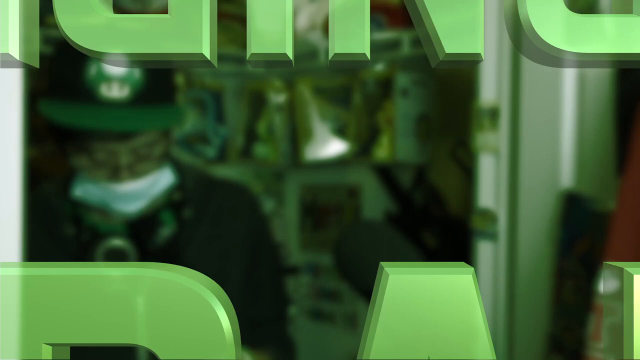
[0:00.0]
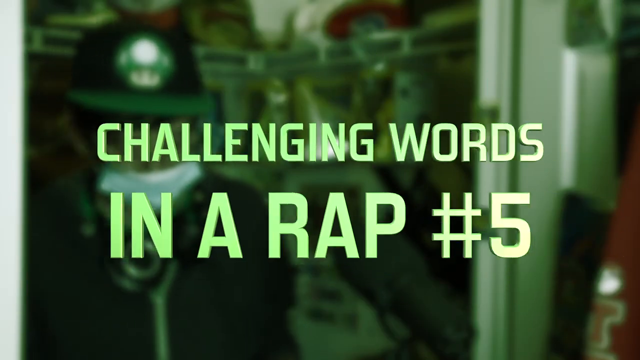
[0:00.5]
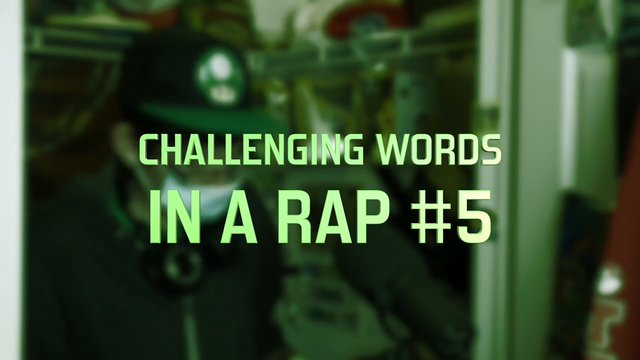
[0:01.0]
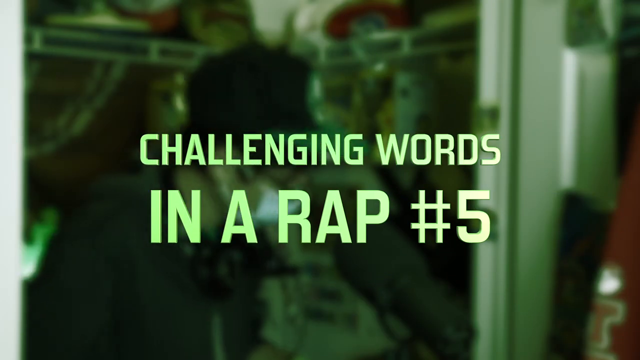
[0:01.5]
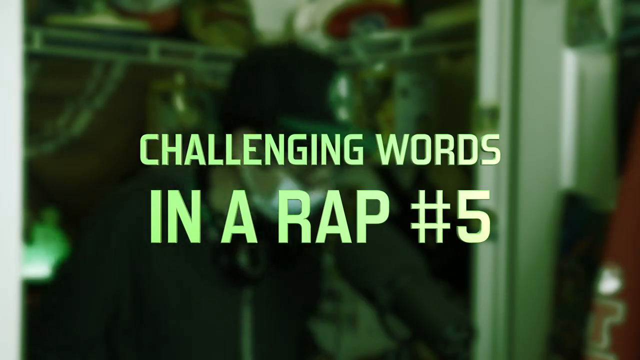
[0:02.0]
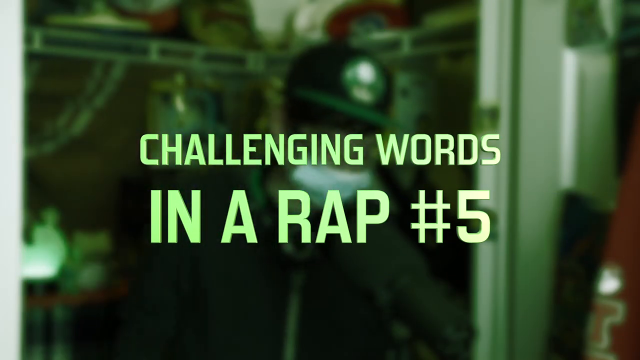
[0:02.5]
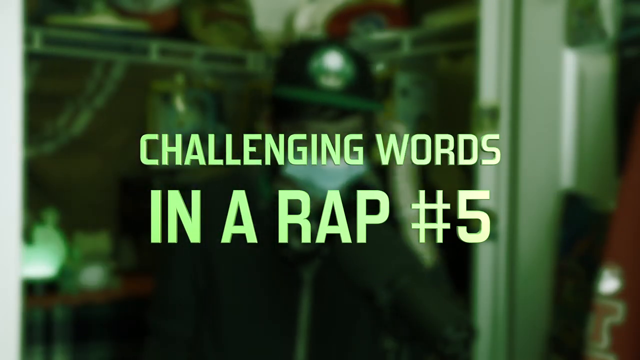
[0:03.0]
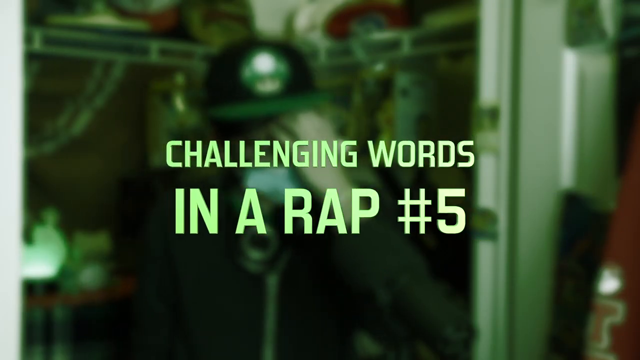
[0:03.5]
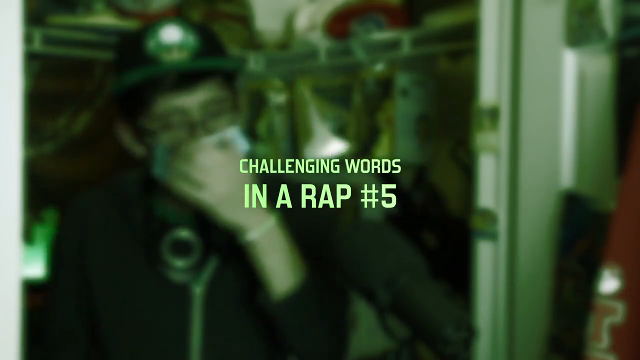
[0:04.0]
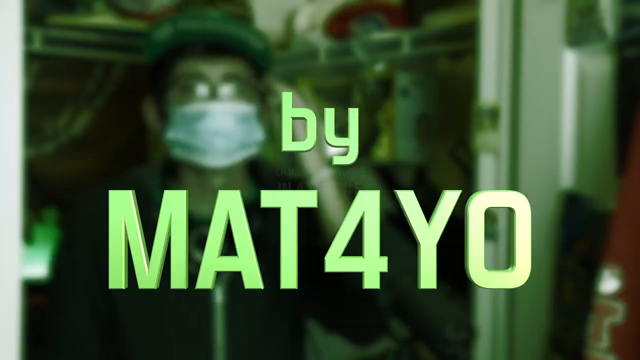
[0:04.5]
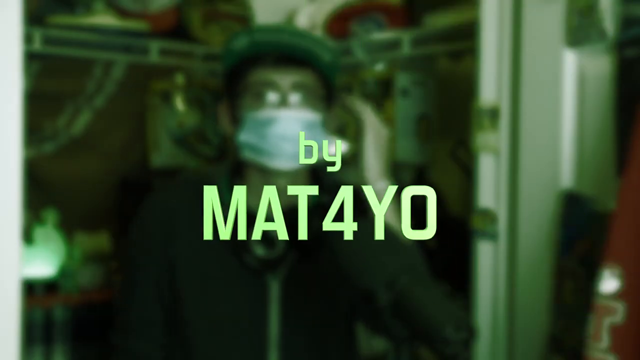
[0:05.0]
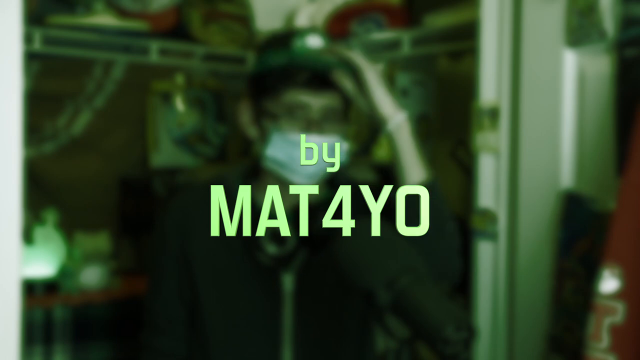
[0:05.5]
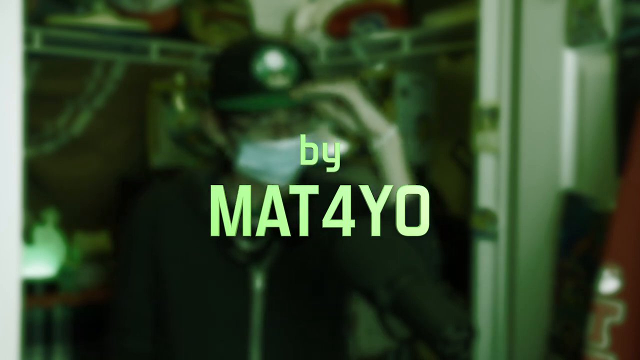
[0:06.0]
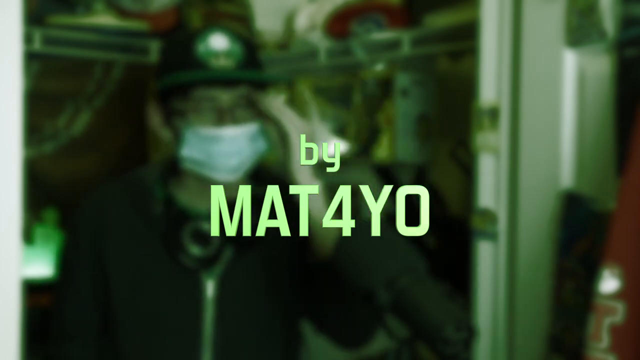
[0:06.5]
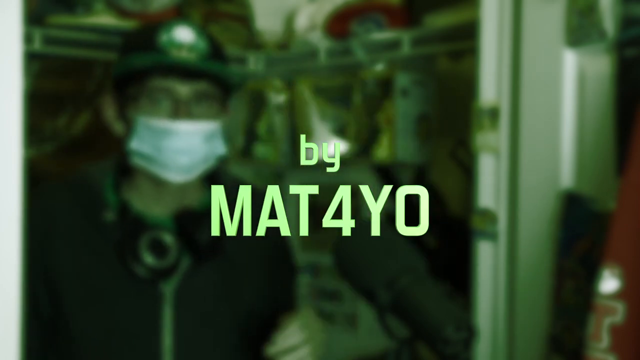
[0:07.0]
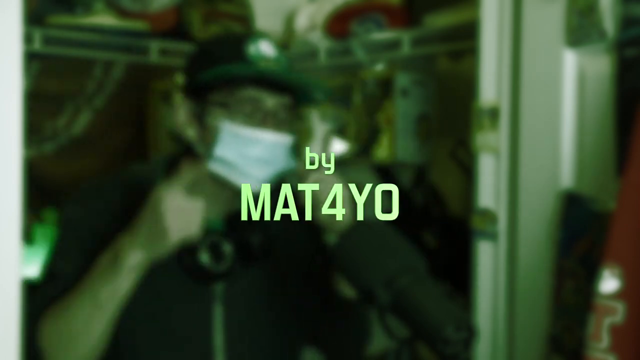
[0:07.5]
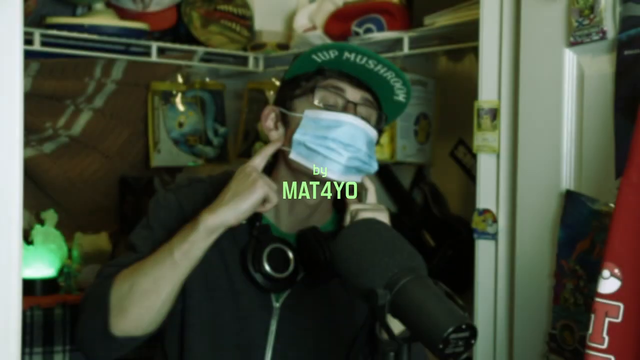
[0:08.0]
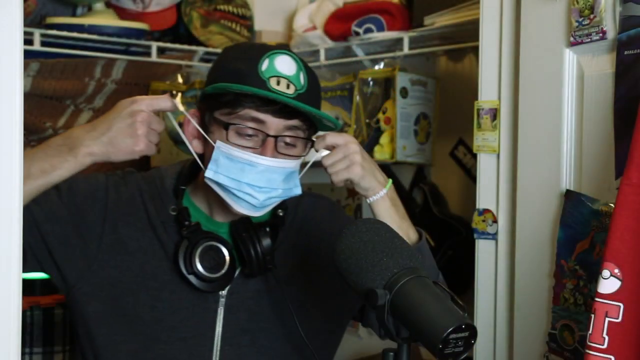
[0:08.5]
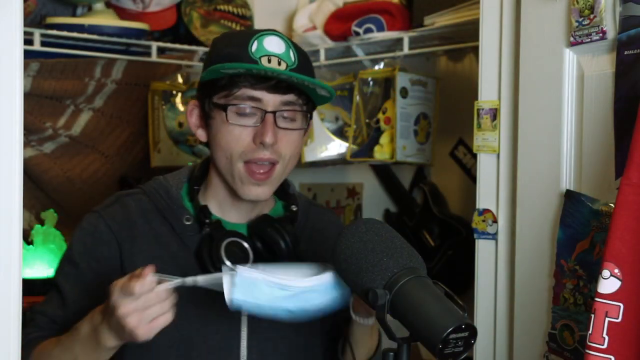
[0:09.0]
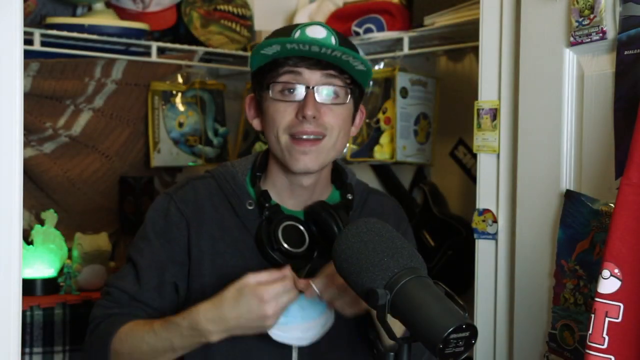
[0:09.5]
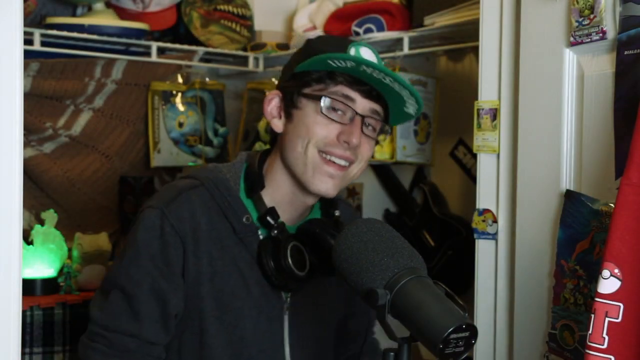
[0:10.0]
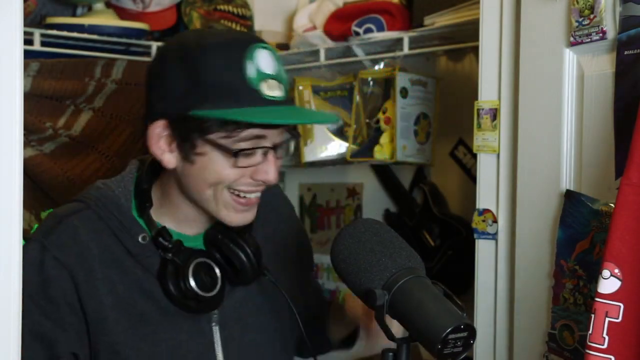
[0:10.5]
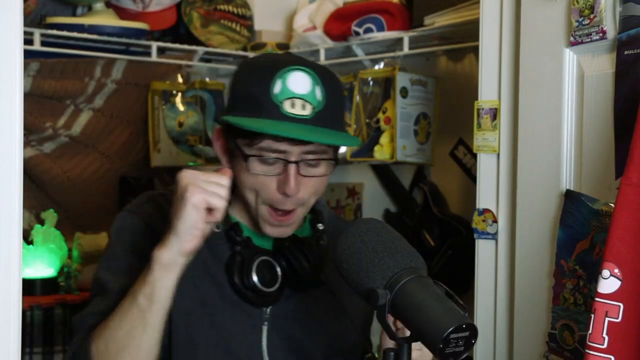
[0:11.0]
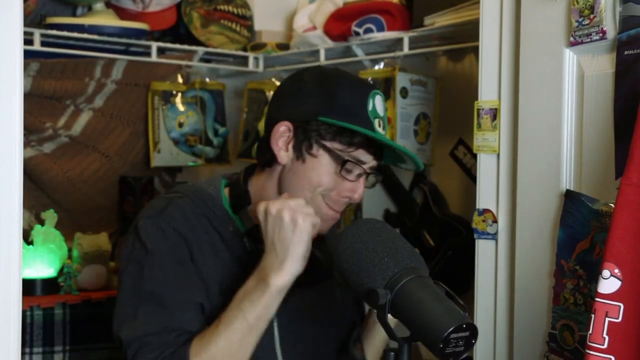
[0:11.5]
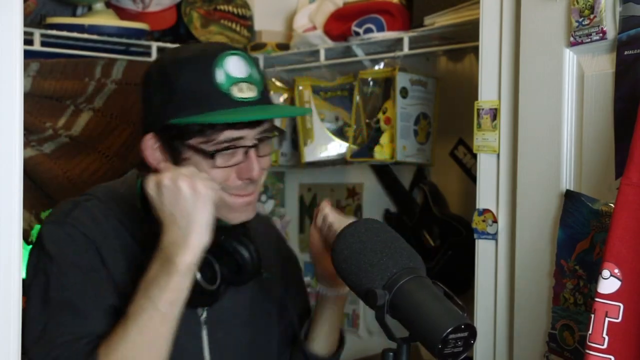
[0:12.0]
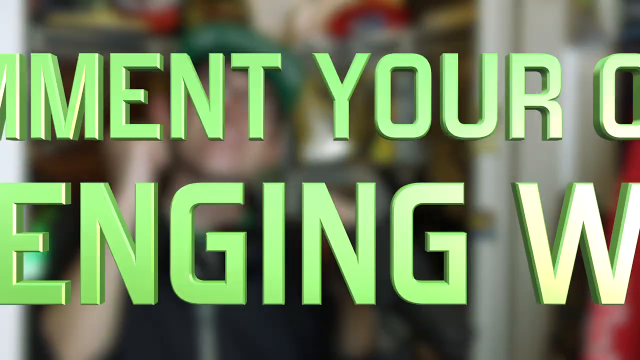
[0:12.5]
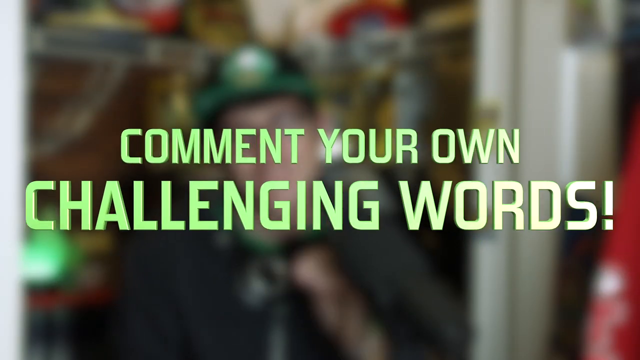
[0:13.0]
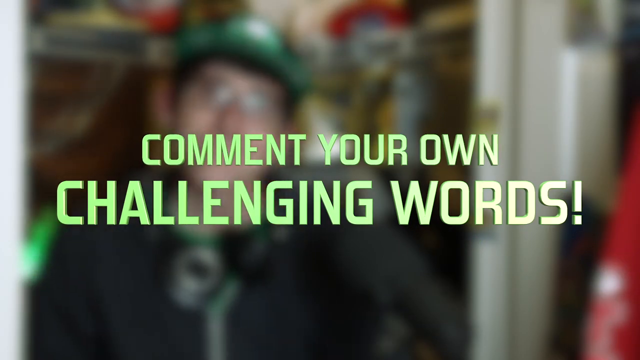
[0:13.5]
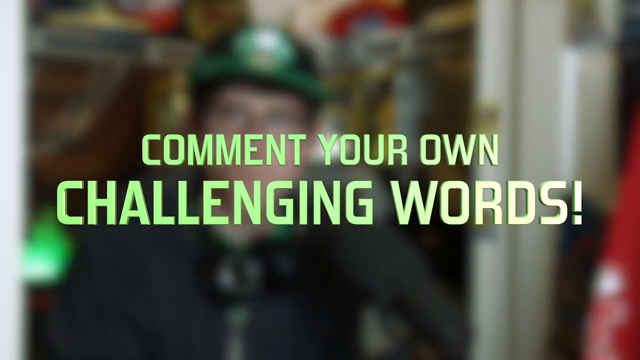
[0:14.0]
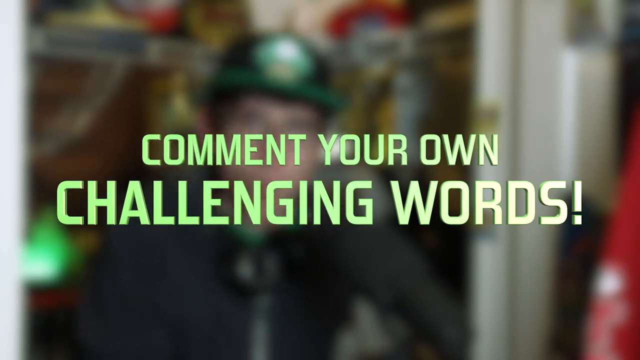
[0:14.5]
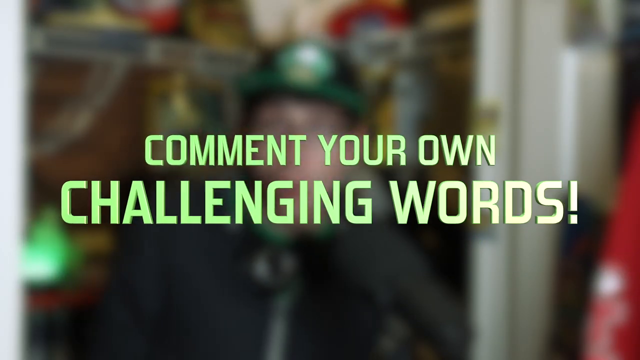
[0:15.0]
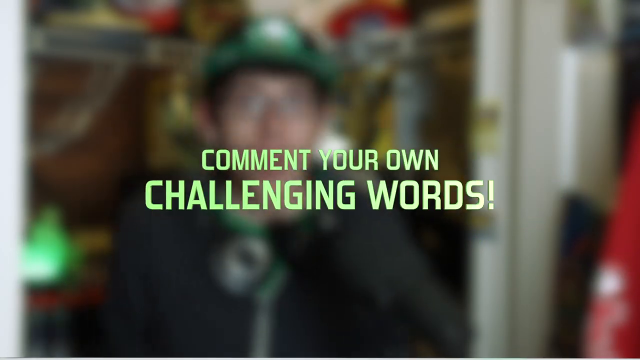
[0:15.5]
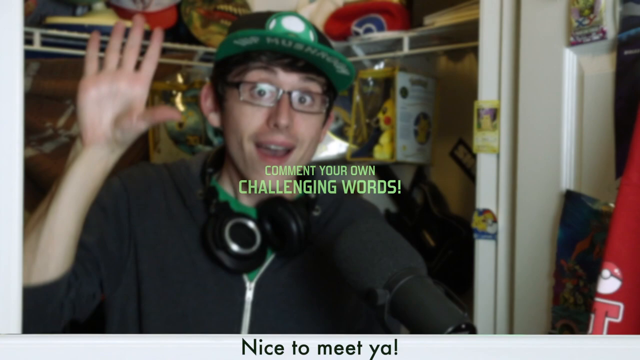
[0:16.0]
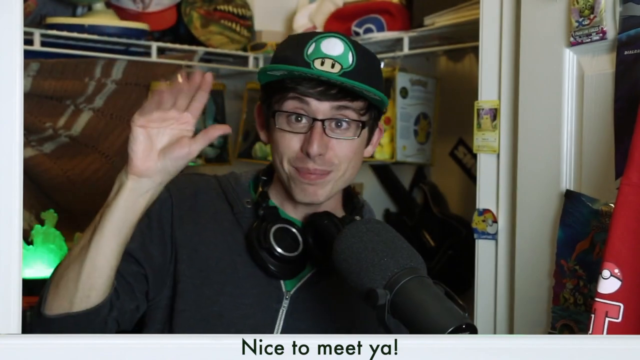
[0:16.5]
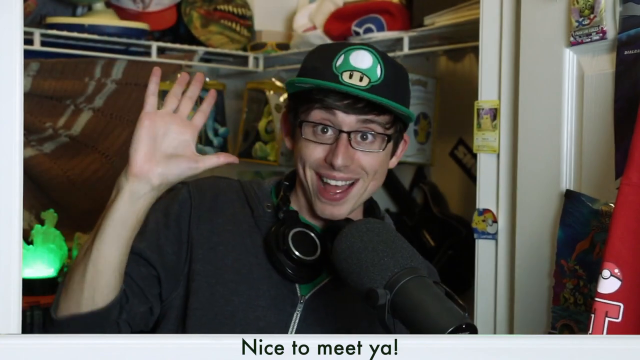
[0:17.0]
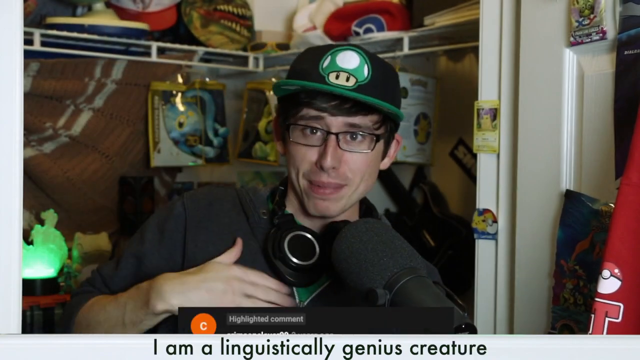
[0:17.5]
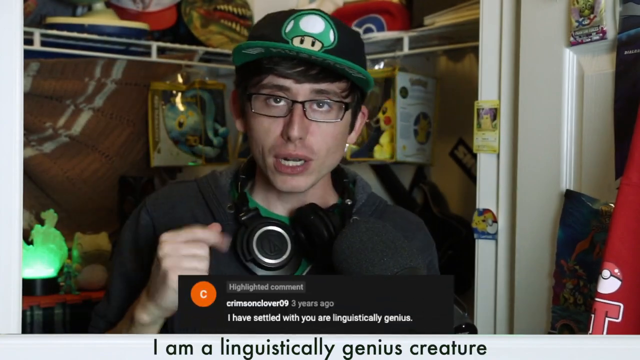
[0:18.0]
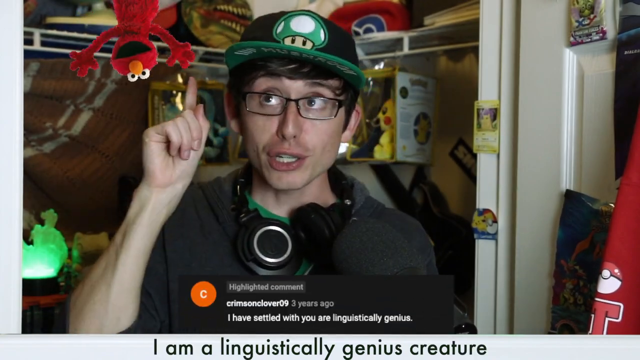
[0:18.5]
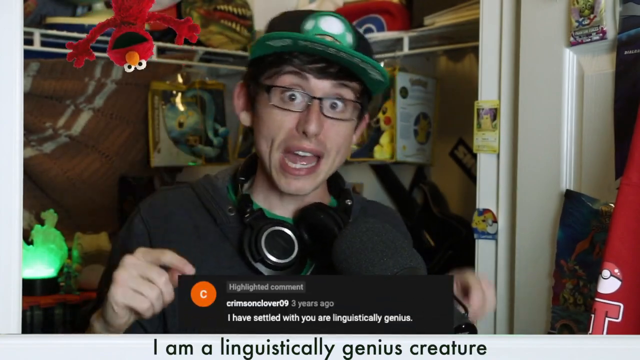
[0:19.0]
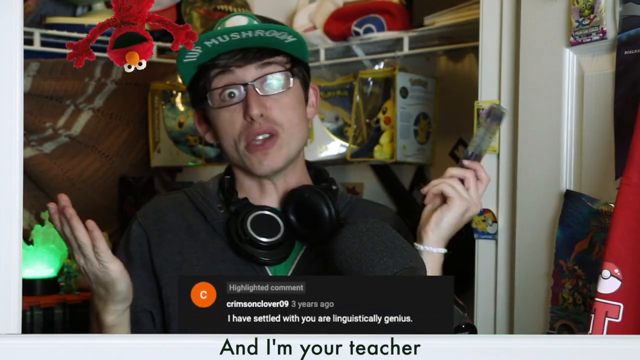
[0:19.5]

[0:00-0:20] The video opens with a green shade covering a man wearing a baseball cap who is standing in his closet. The first words pop up reading "CHALLENGING WORDS IN A RAP #5", then zoom away and become smaller, followed by another set of words, "by MAT4YO", which also zoom away and shrink. When the words disappear, the green shade clears and the man is clearly visible. He wears a medical face mask, black rectangular glasses, a black zip-up sweater and a black baseball cap with a green 1-up mushroom from Super Mario, with black headphones around his neck. The closet behind him is full of items such as boxed Pokemon, with baseball caps at the top. The man takes off his face mask, sways to his left and right, then begins dancing by pumping his arms. The screen blurs and the words "comment your own challenging words!" appear and zoom away by getting smaller. Once they disappear, the man waves by opening and closing his right hand, taps his chest and begins speaking. As he speaks, a bottom banner appears with a comment by crimsonlover 09 from 3 years ago reading "I have settled with you are linguistically genuis", and an Elmo comes down from the top right-hand corner; the man points at the Elmo.